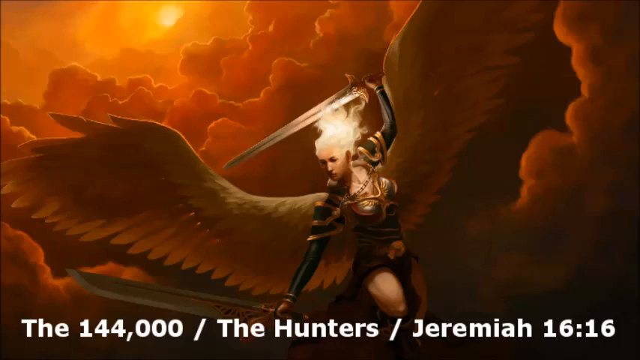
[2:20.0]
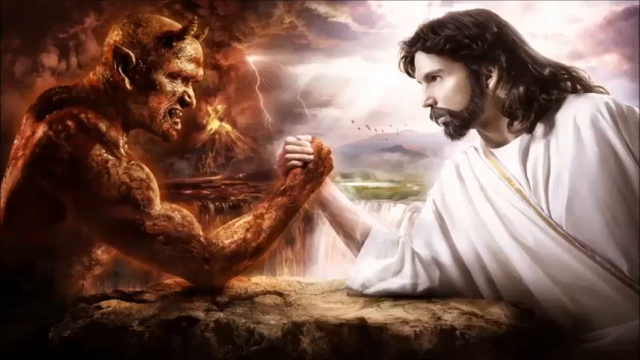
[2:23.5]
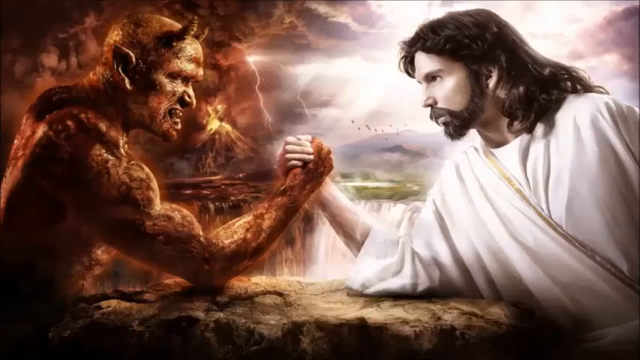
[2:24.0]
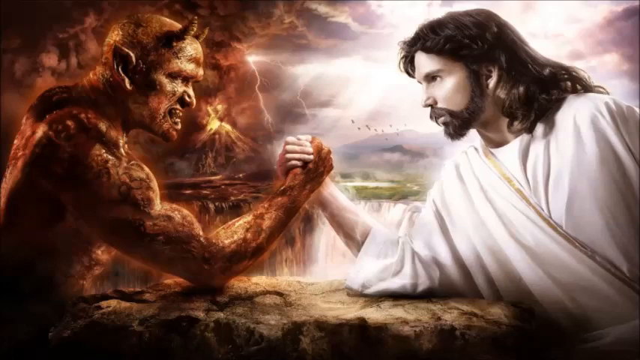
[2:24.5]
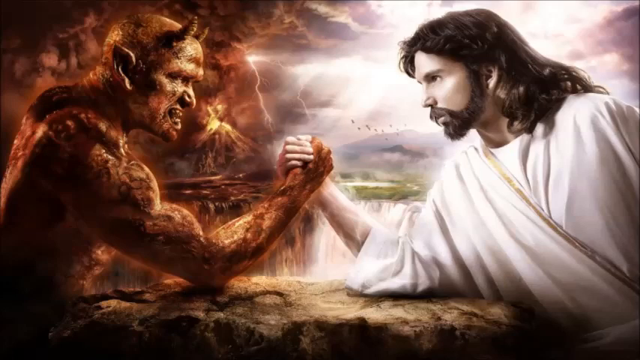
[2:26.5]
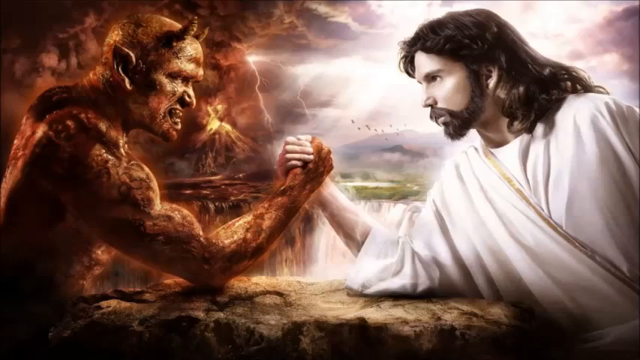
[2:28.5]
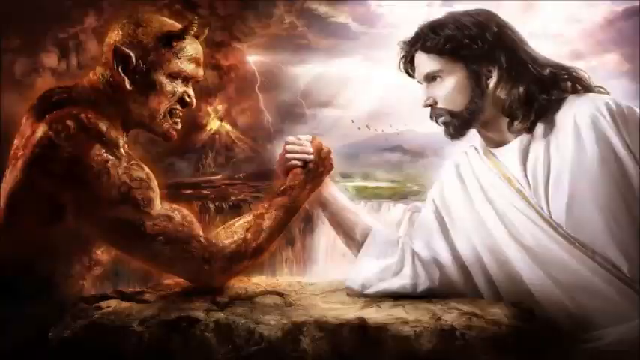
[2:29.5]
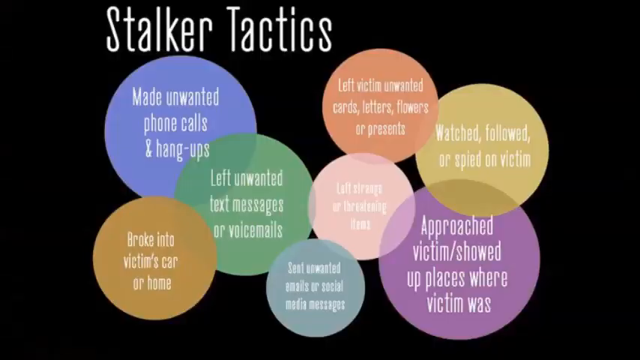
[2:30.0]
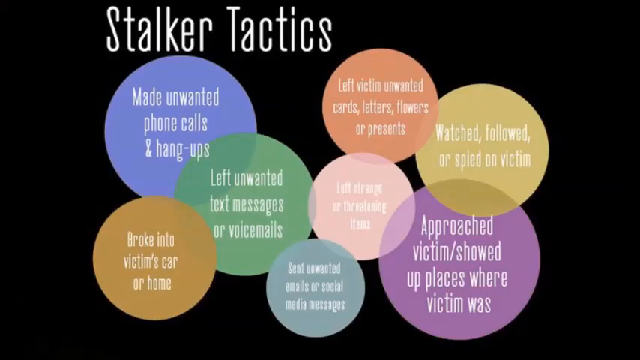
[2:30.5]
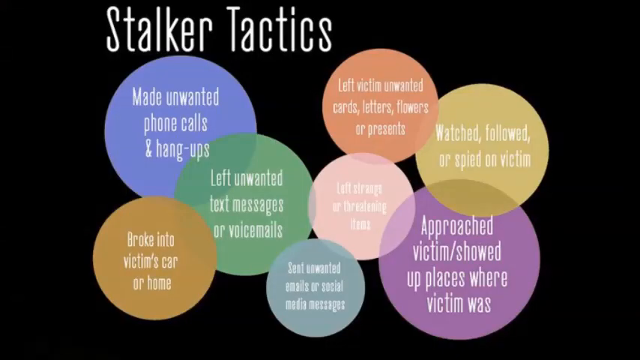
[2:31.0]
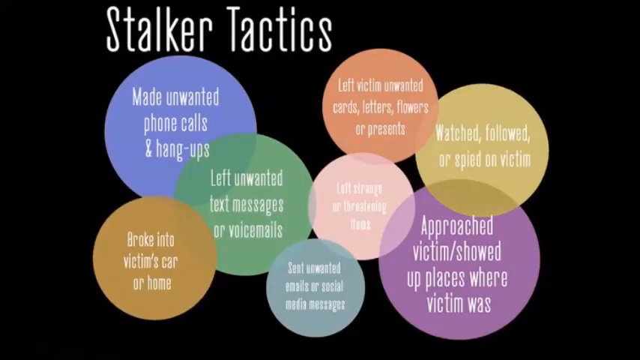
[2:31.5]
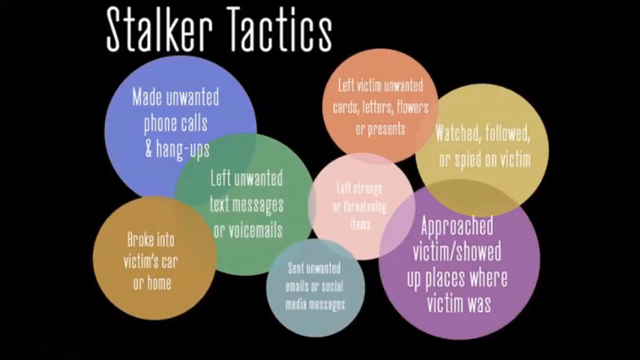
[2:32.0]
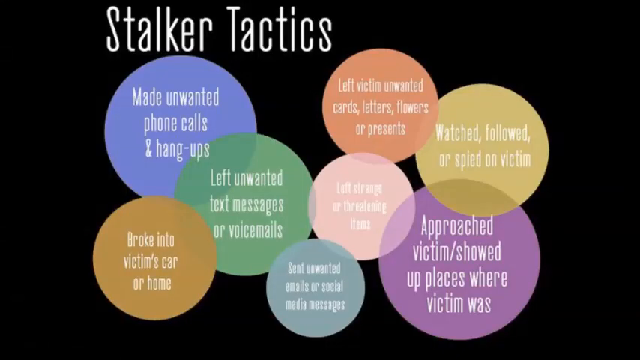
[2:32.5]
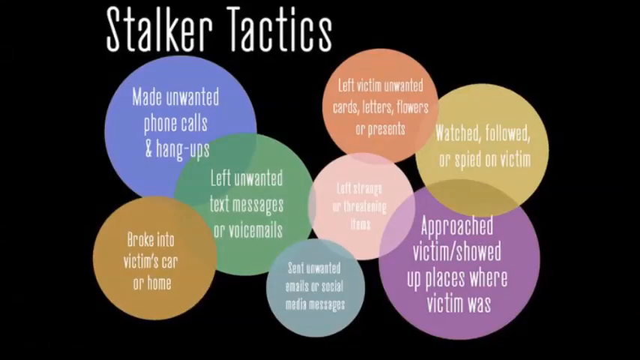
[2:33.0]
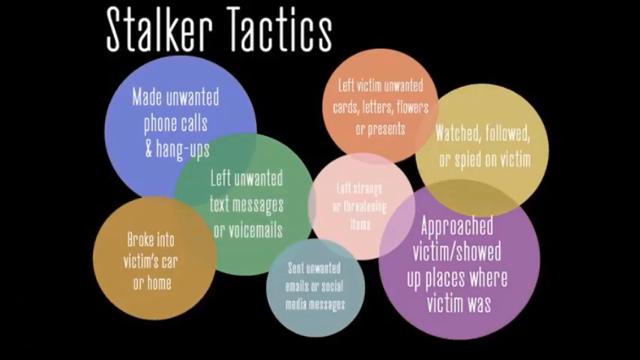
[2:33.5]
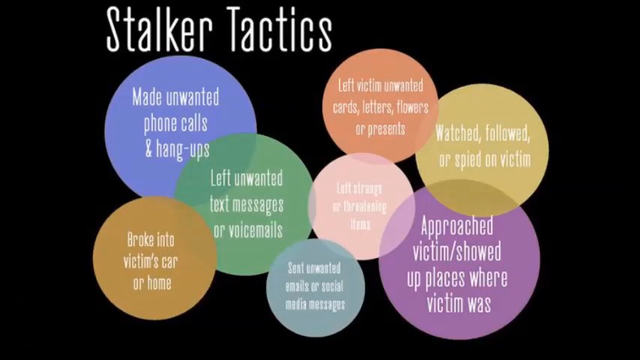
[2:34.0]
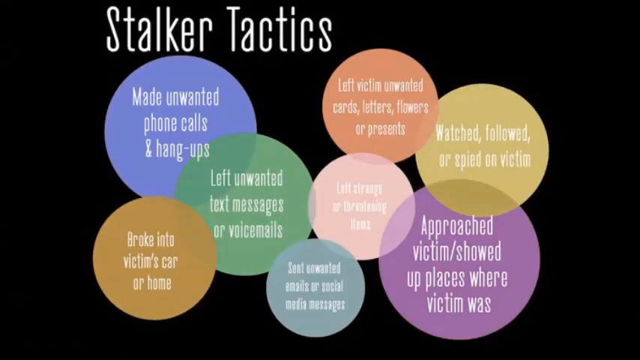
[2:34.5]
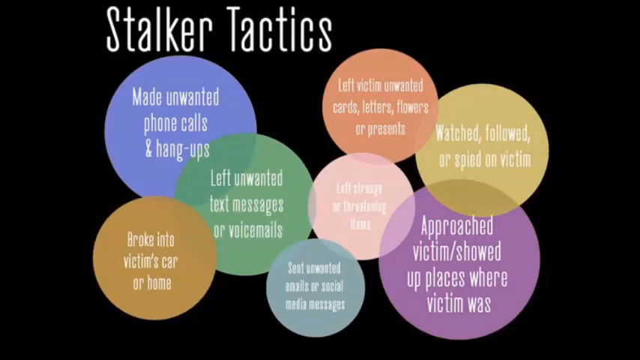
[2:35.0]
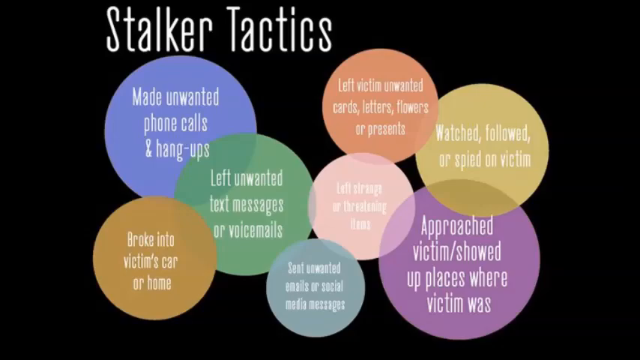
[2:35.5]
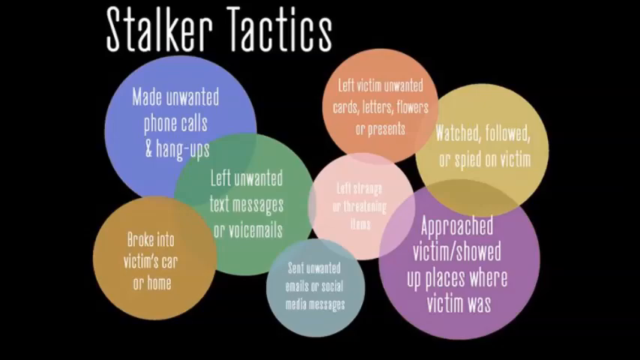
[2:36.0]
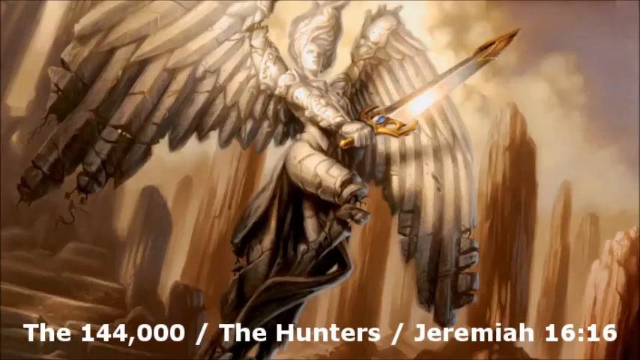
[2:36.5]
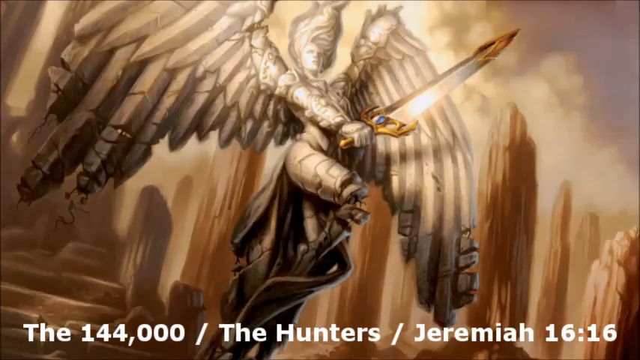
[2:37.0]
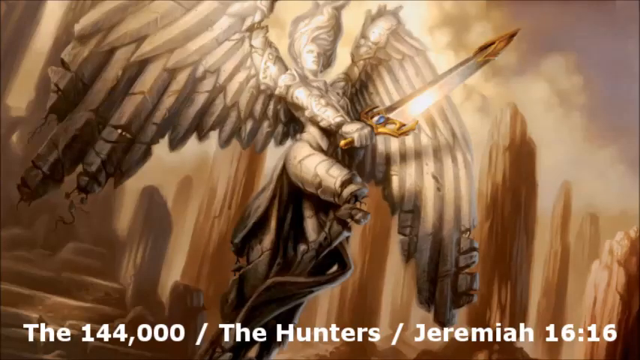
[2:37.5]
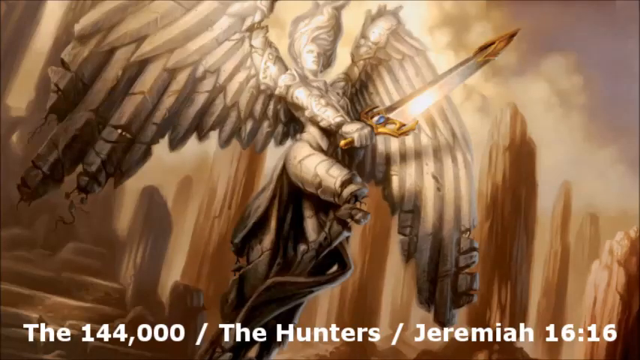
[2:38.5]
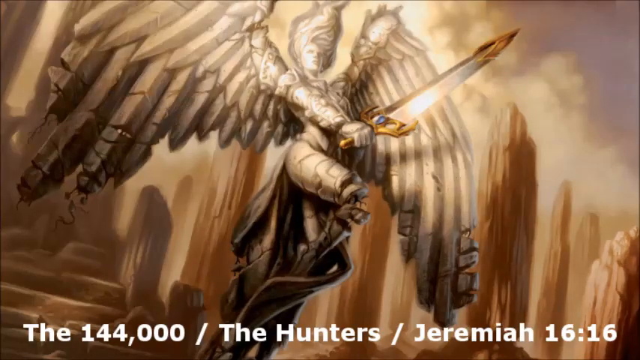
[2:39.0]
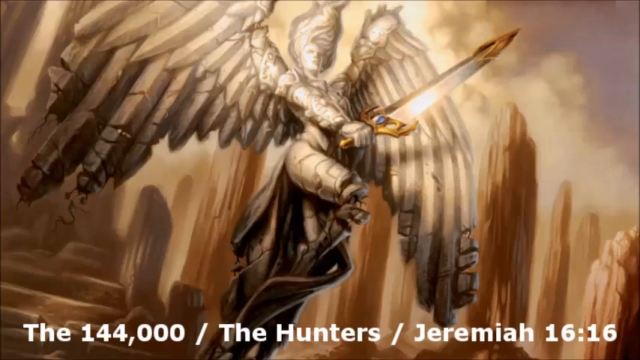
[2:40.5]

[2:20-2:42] An image shows a person with wings holding a light-colored sword in the left hand. Behind the person are red and orange clouds, and in the lower part there is a black rectangle containing white words. Next is an image of two people, one on the right and one on the left, arm wrestling. The person on the right wears a white tunic and has very long dark hair and a beard, while the person on the left has orange and red skin and a pair of horns on the forehead. Another image follows with several colored circles, each containing paragraphs of white text; in the upper left corner there are two more white words on a black background. Finally, there is an image of a person holding a sword in his right hand, with dark brown rocky structures in the background. In the lower part of the frame there are white words separated by oblique white strips.